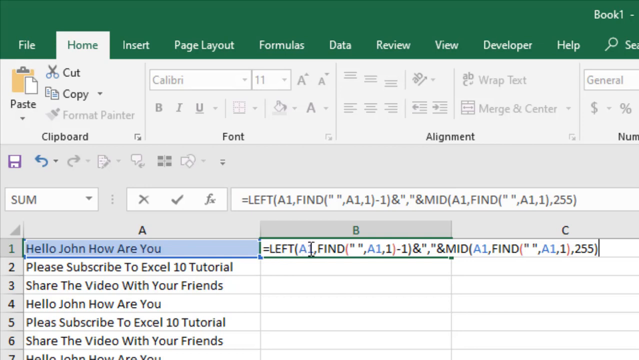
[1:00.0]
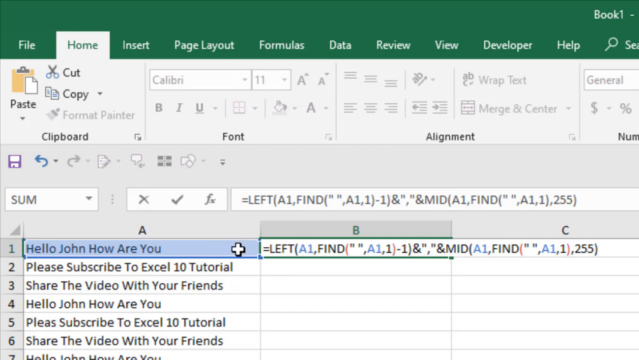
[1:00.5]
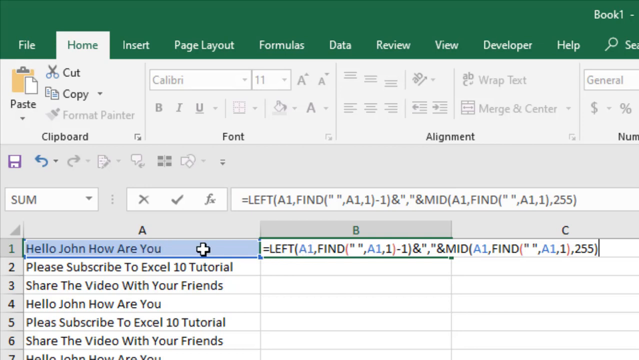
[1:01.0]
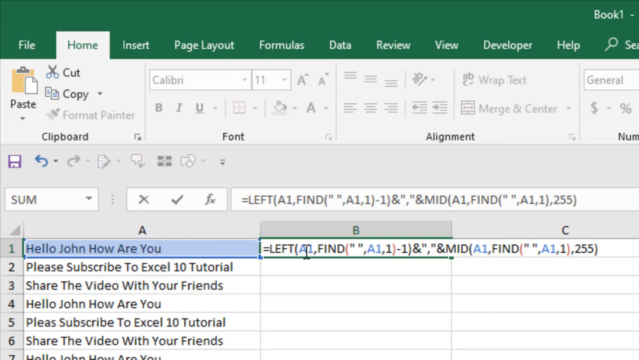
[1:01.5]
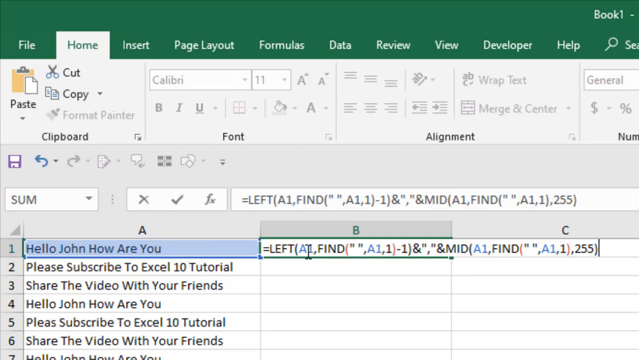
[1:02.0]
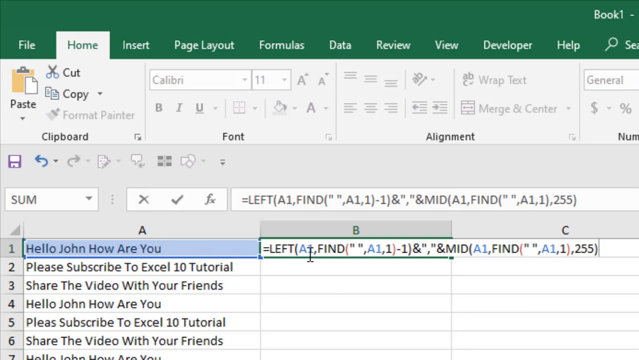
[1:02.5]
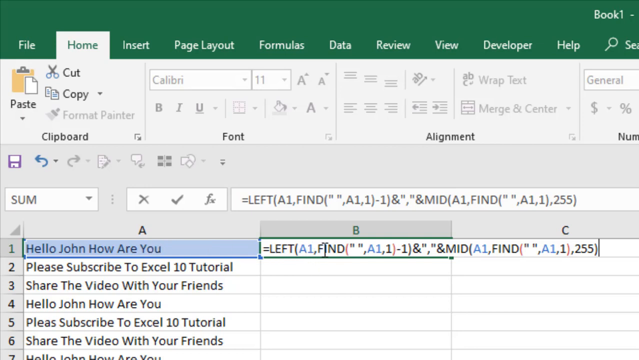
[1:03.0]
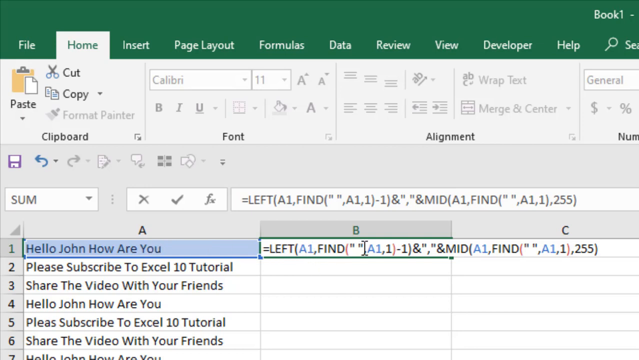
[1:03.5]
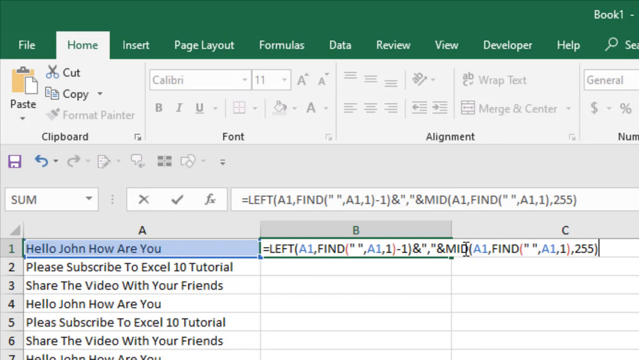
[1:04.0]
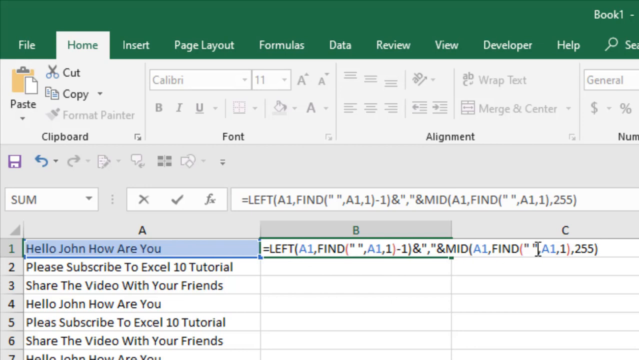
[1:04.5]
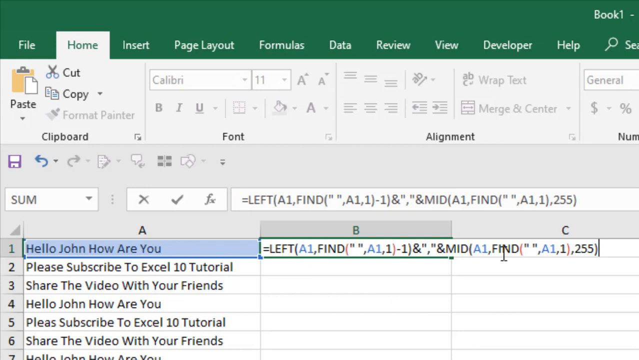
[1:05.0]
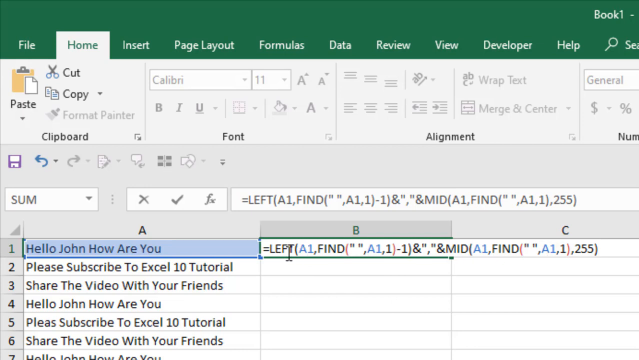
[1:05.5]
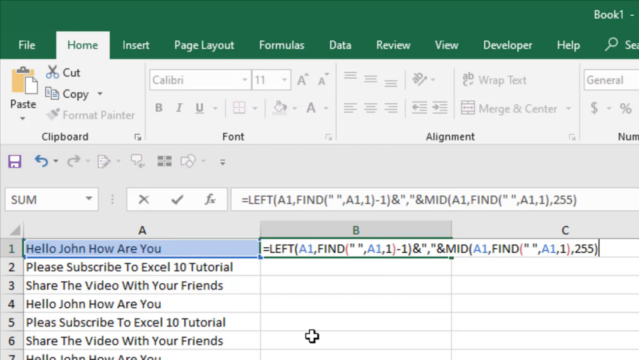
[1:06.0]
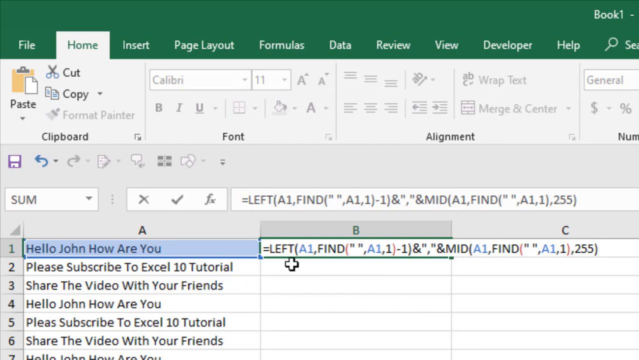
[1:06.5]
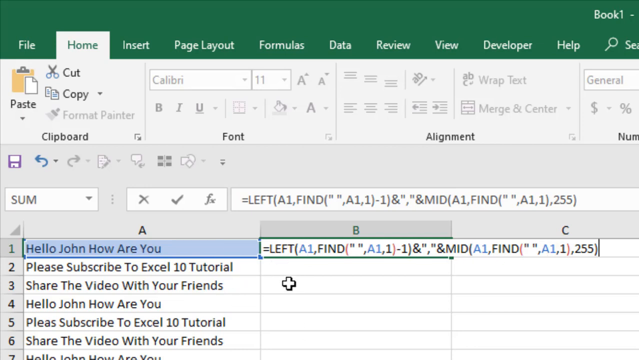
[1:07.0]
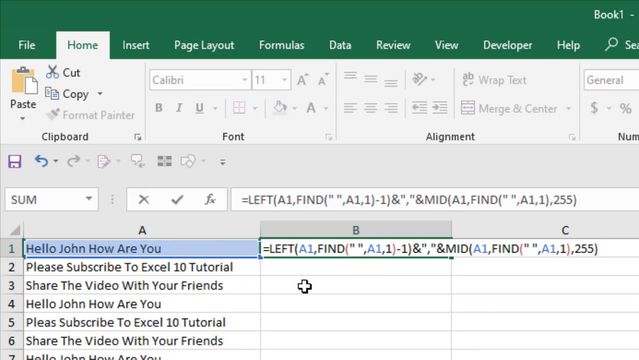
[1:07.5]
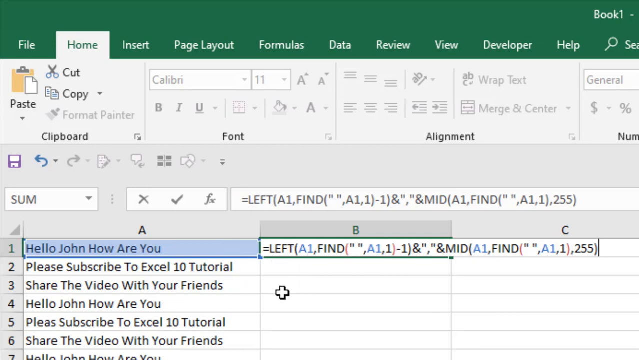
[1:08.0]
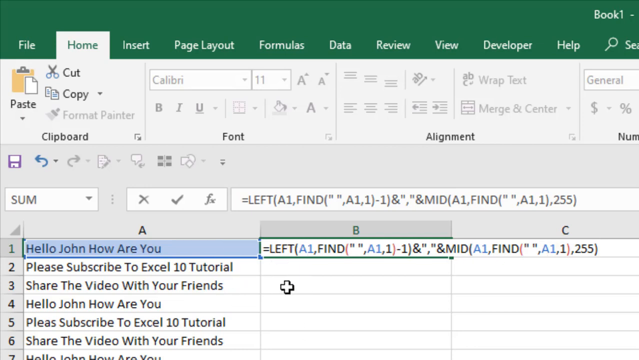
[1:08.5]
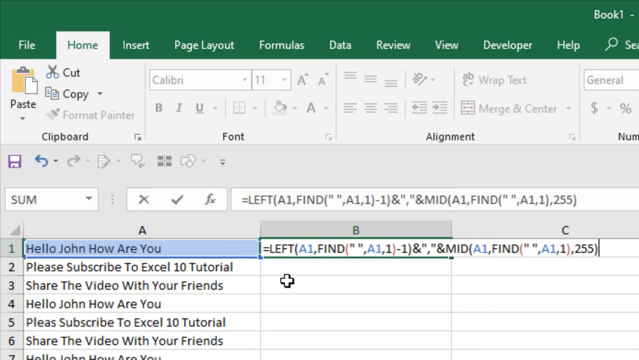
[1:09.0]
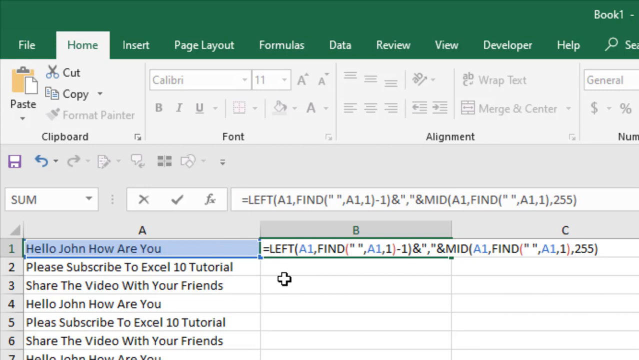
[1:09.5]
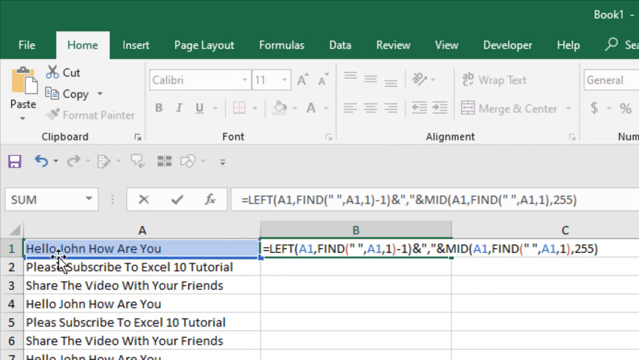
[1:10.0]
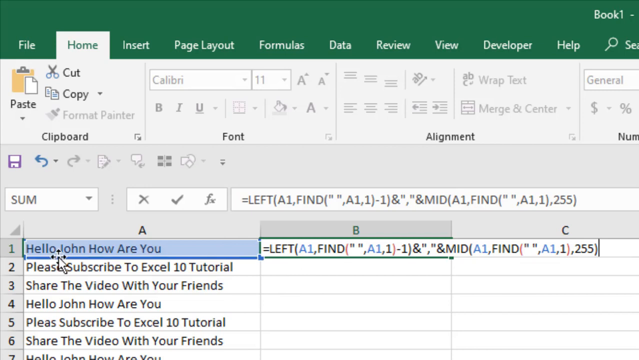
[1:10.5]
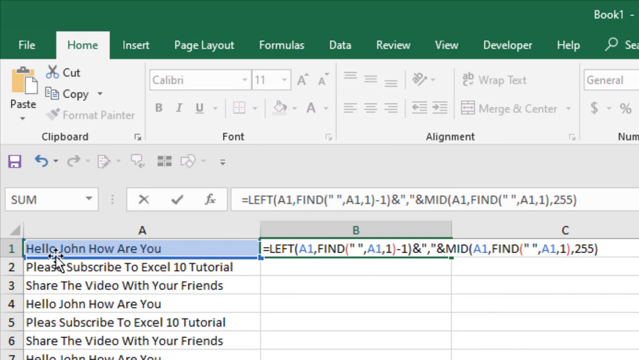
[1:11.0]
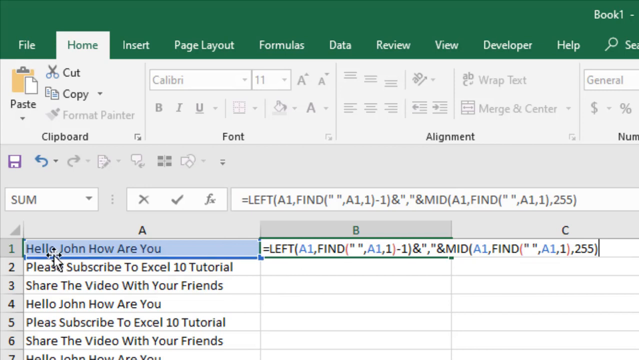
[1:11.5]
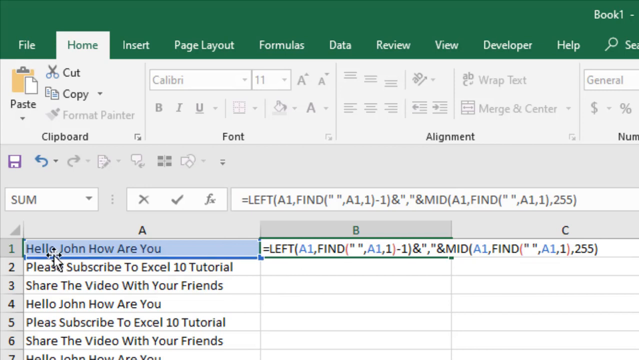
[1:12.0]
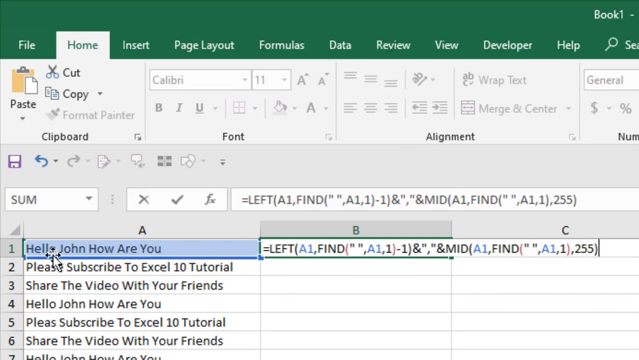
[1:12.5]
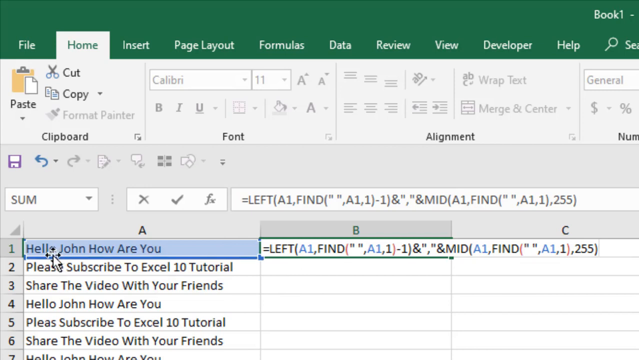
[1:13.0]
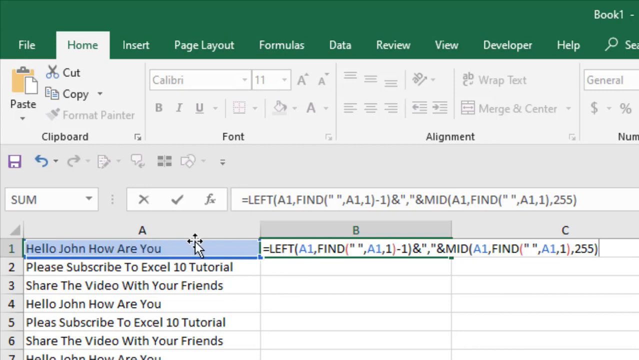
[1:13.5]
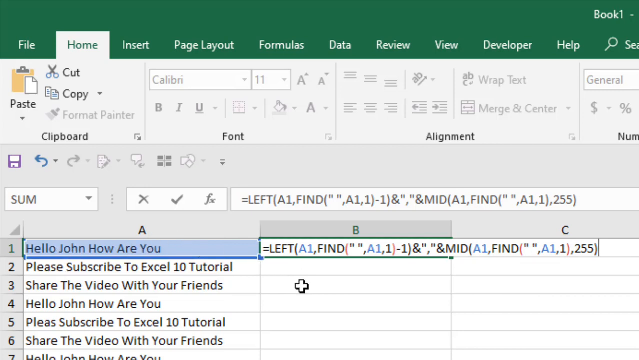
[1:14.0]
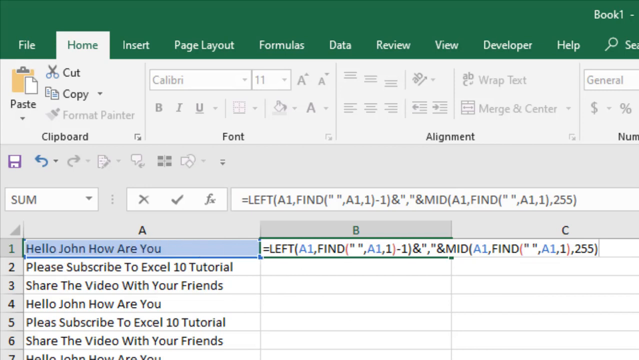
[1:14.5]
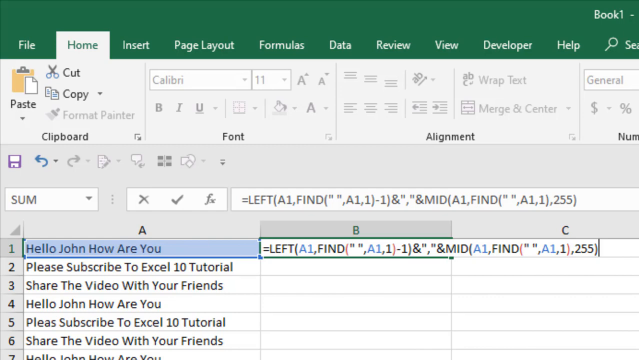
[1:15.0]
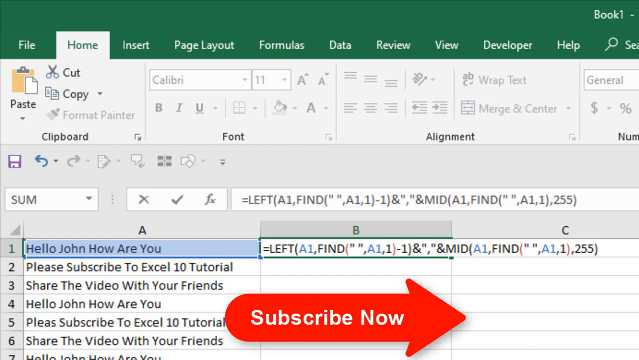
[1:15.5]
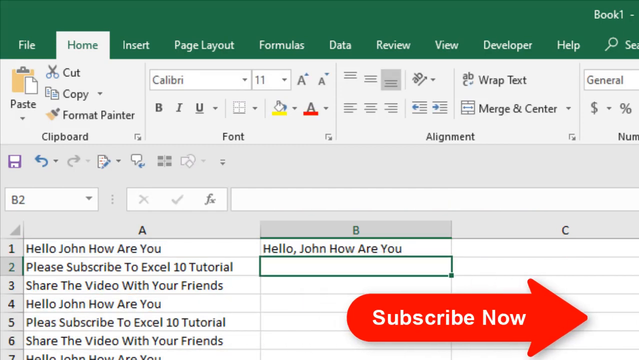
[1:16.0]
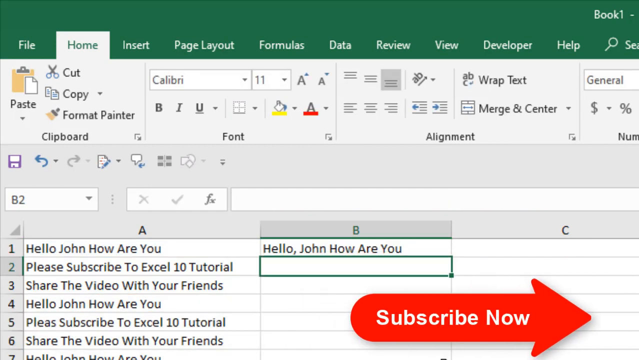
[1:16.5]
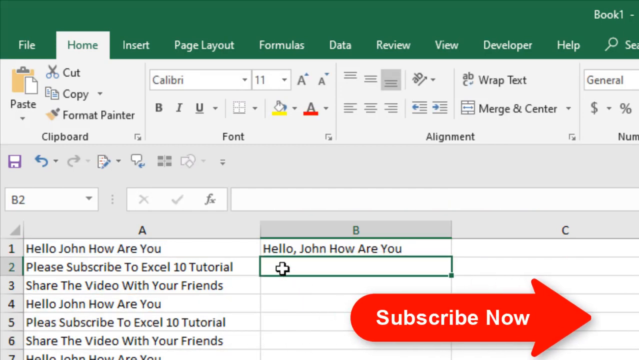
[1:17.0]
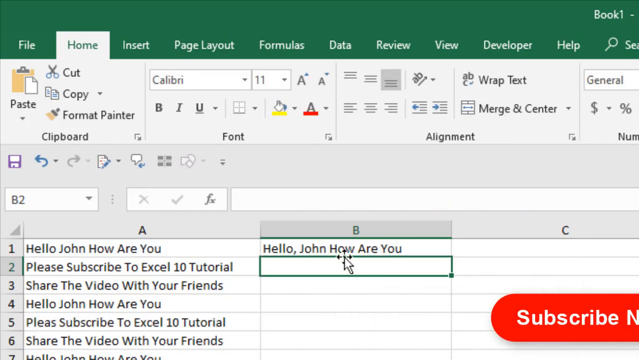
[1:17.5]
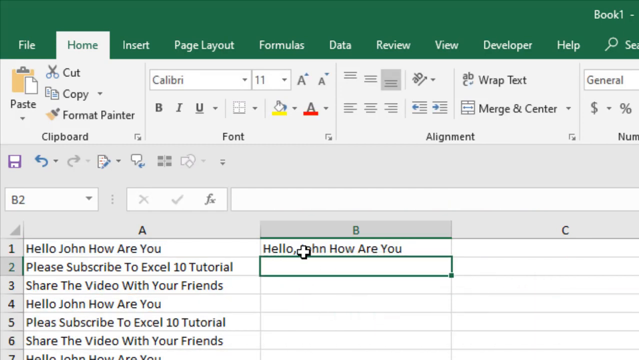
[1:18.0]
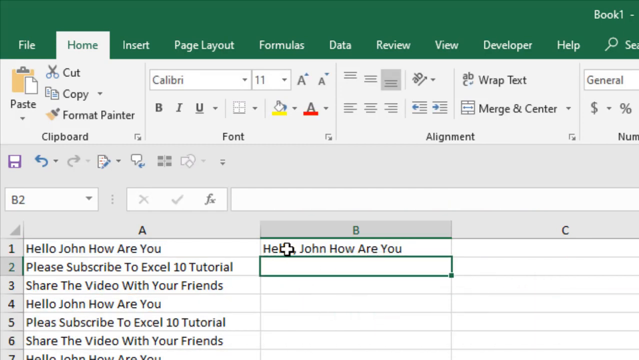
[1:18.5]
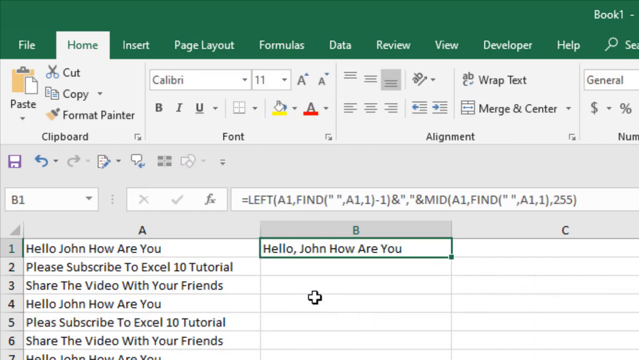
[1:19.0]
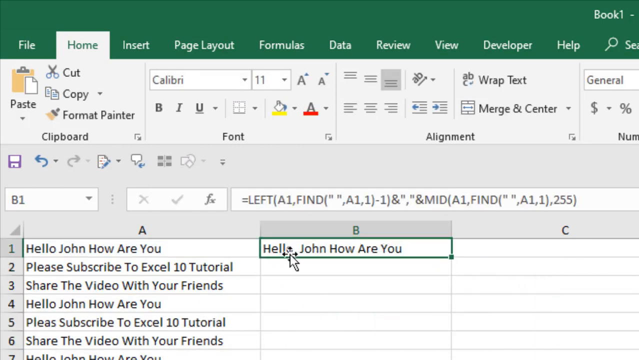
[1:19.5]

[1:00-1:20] The person continues working in the Excel sheet, highlighting A1, while B1 contains text. The cell data still shows formula-like text including "left A1" and "mid", with quotation marks and "minus 1", unchanged from before. Then the contents of A1 apparently are copied and pasted into B1: B1 shows the same sentence as A1, "hello John, how are you?", except with a comma after "hello".